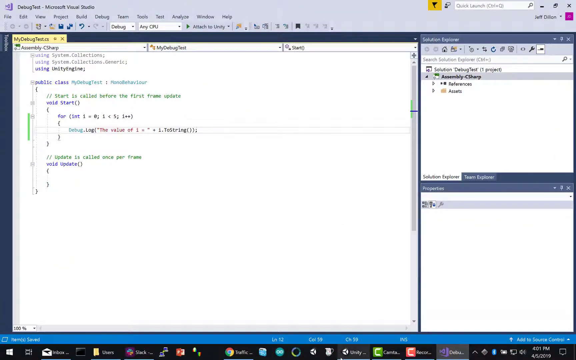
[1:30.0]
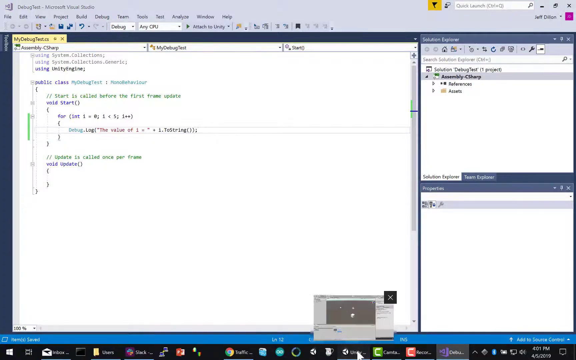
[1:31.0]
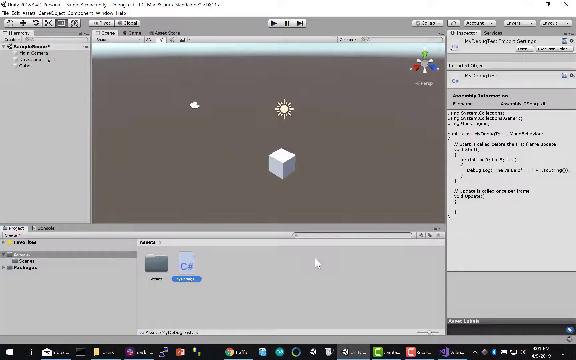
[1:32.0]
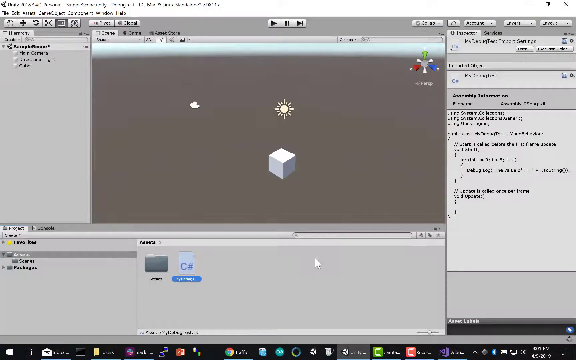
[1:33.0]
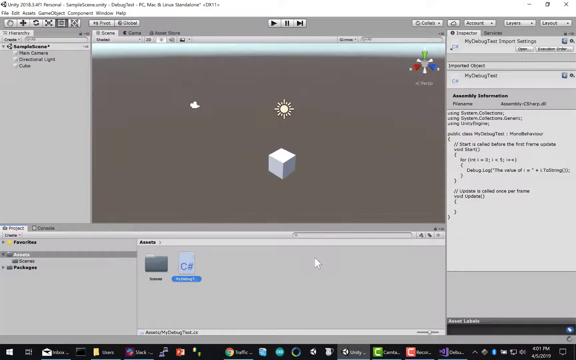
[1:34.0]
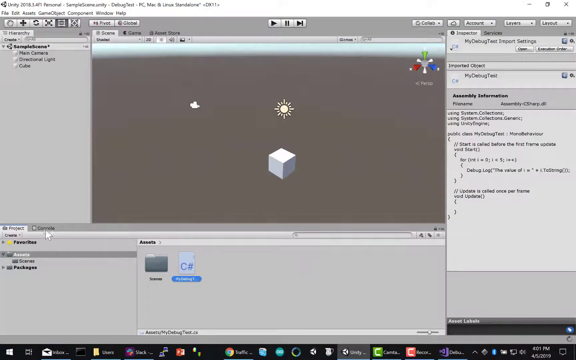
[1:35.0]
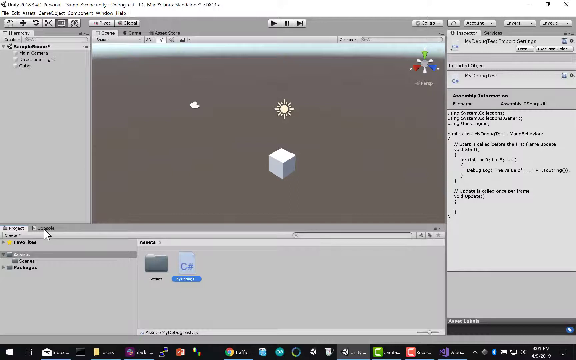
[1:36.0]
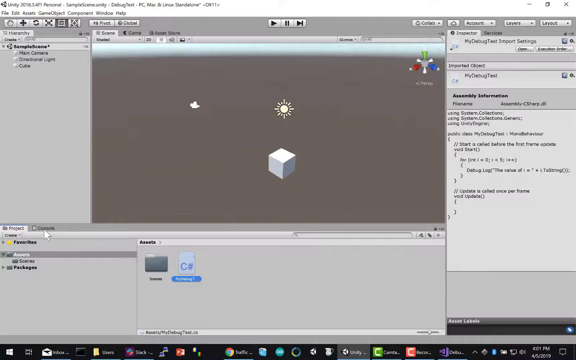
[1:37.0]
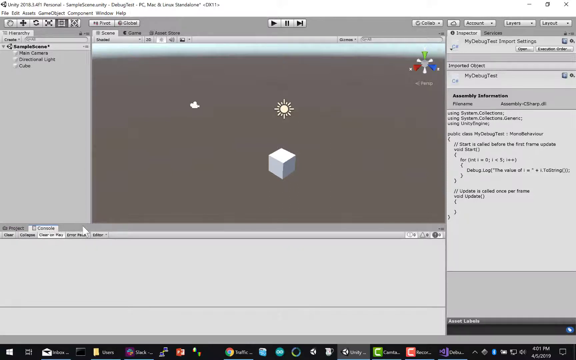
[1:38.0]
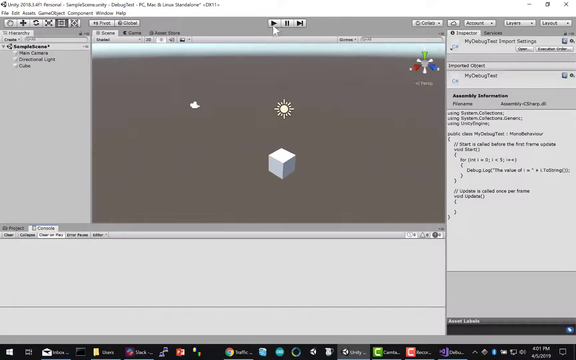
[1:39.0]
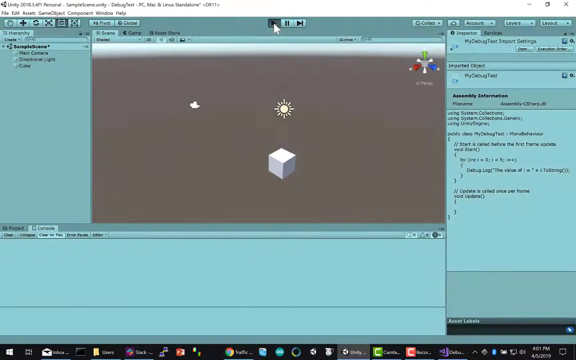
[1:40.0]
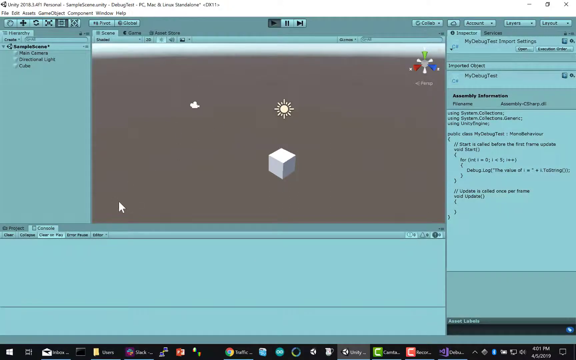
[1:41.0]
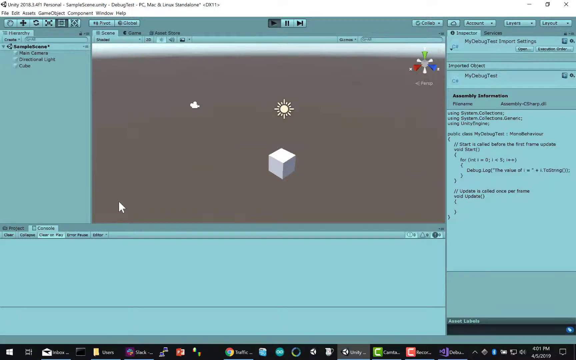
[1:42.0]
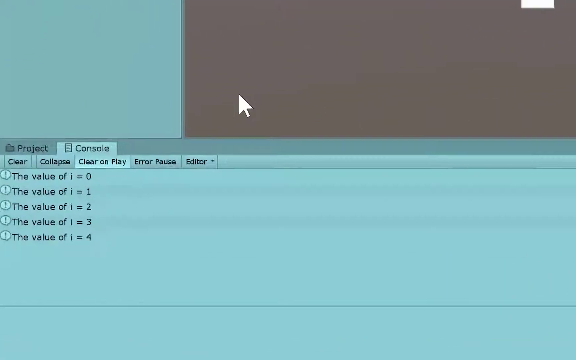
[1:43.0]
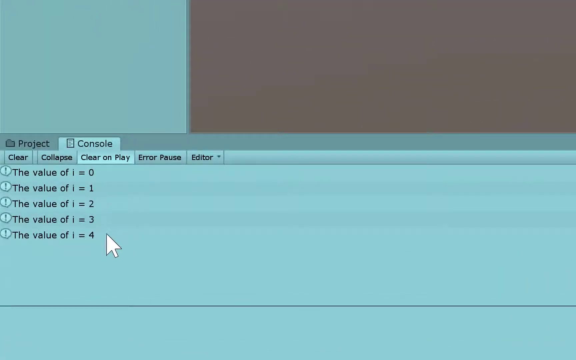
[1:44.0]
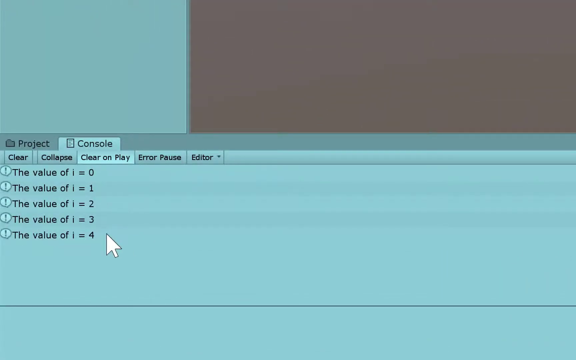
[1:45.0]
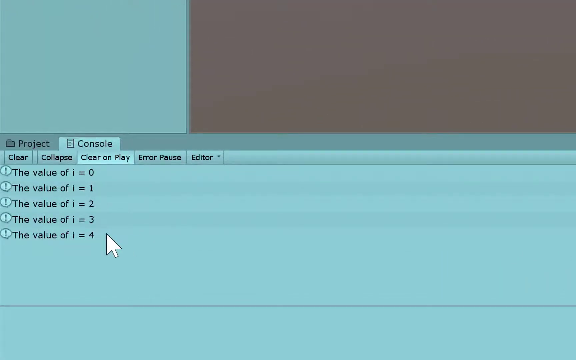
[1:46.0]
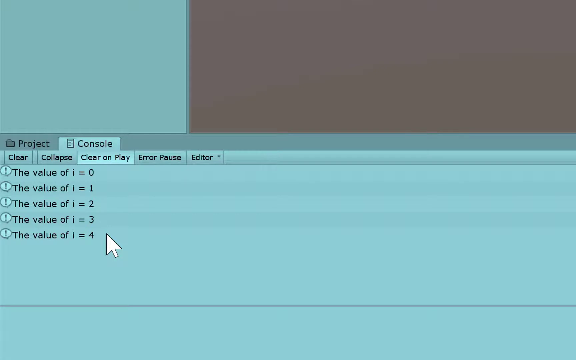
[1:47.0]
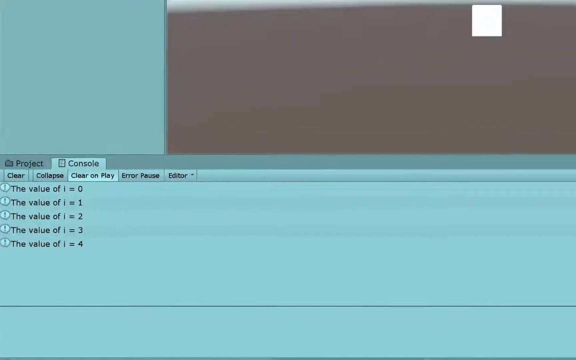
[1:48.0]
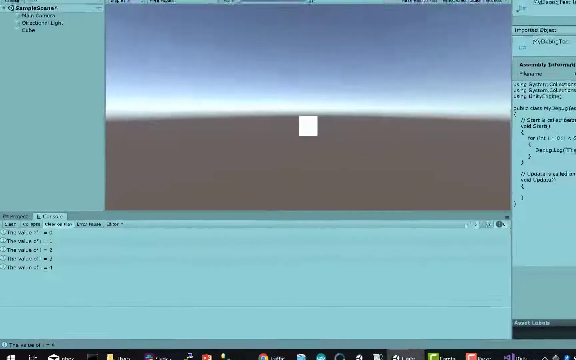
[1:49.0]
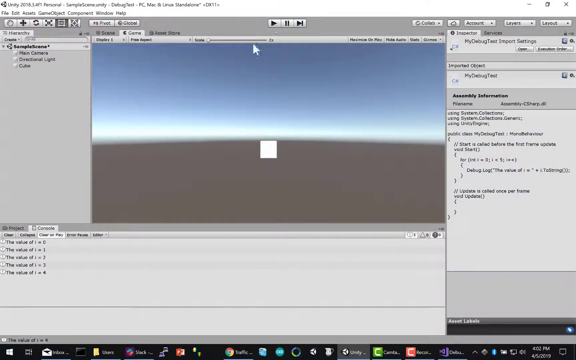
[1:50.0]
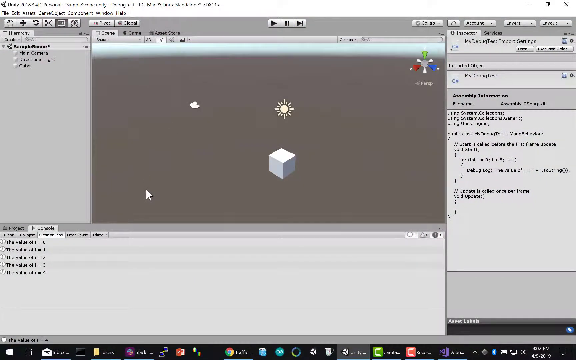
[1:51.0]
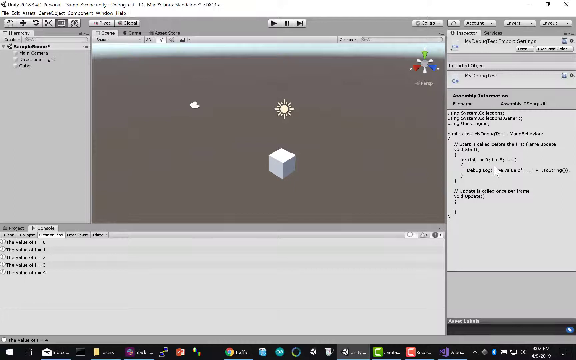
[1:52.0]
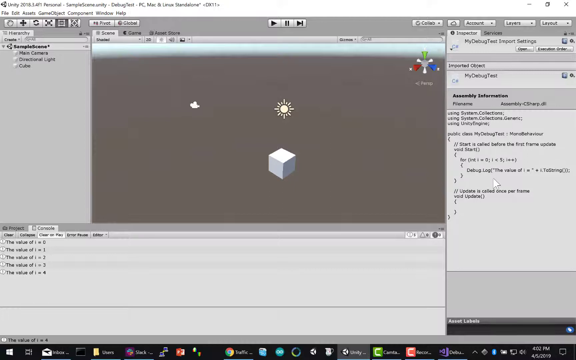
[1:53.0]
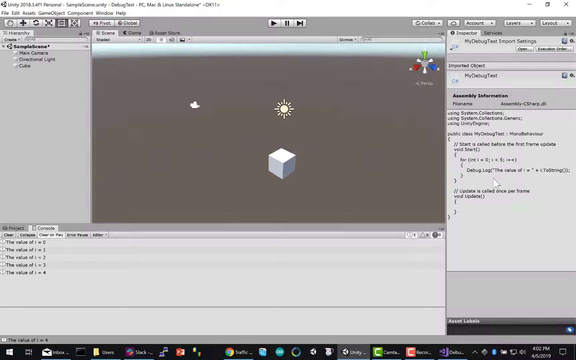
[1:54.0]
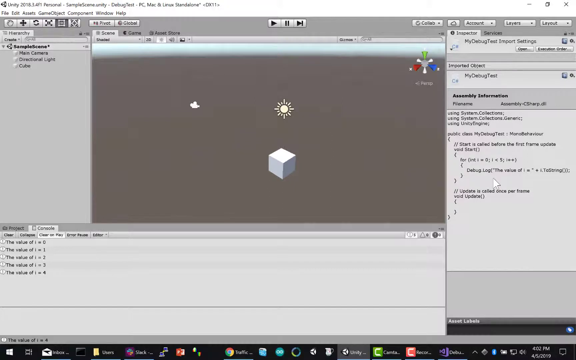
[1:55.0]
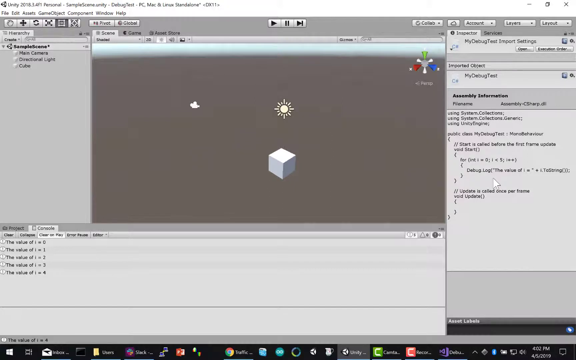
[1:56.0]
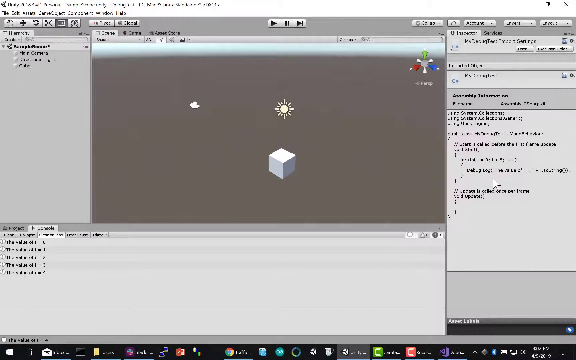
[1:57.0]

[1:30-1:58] The screen seems to be further toward the end of the debugging setup. The icon with the box in the middle is shown along with a new icon that looks like a little sun. They click an icon at the bottom, then move to the top and press a play button, and the colour of the screen changes. Five different values are shown, from 0 up to 4. The focus then shifts from the left screen, where it had been, to the right side of the screen.